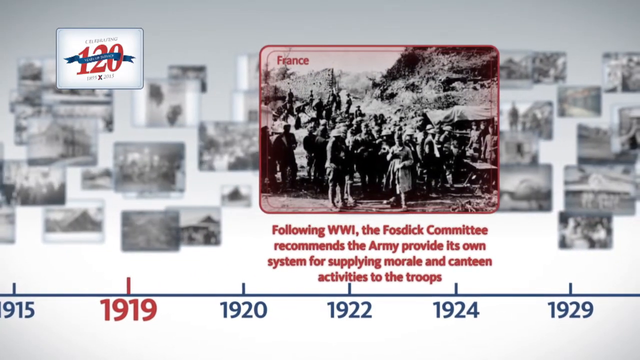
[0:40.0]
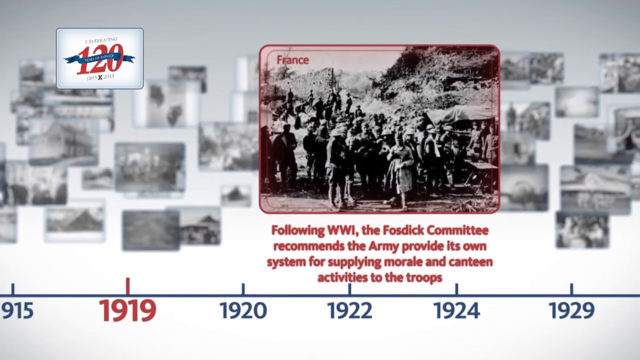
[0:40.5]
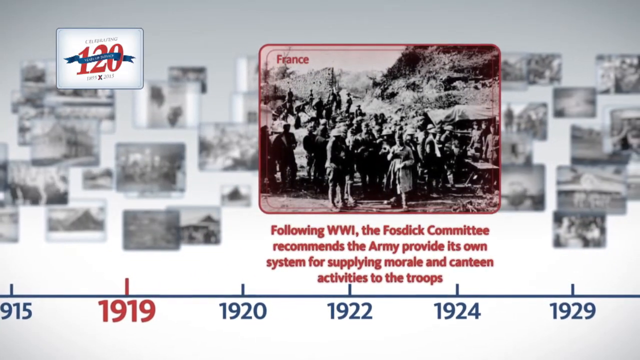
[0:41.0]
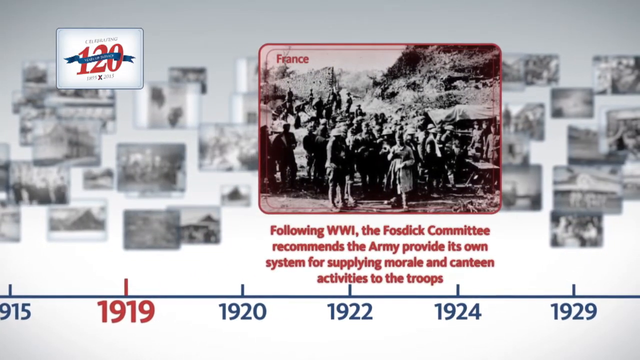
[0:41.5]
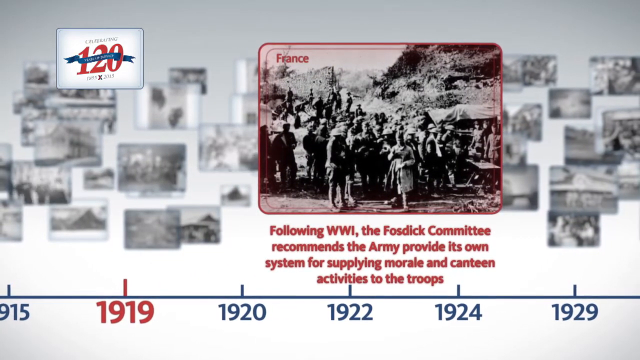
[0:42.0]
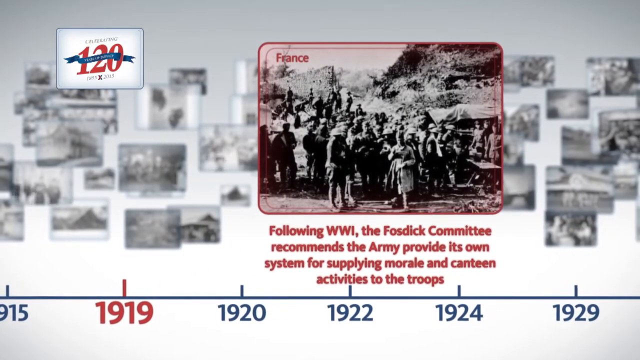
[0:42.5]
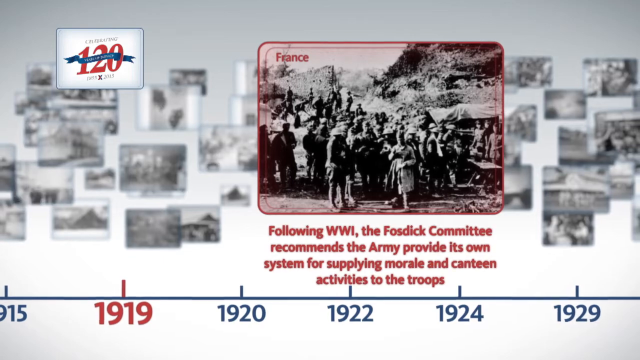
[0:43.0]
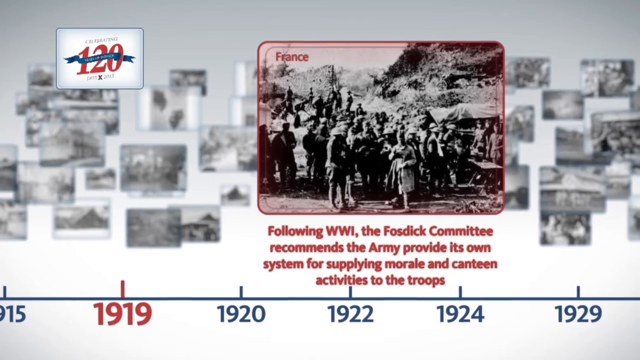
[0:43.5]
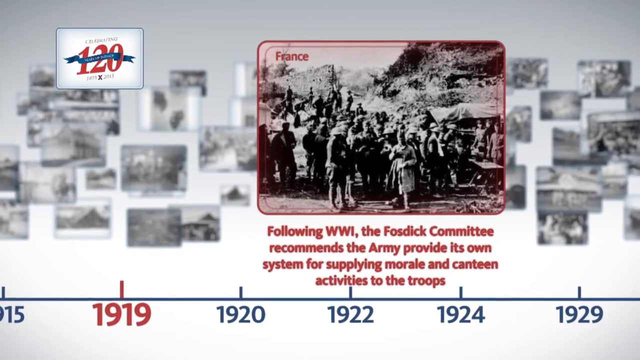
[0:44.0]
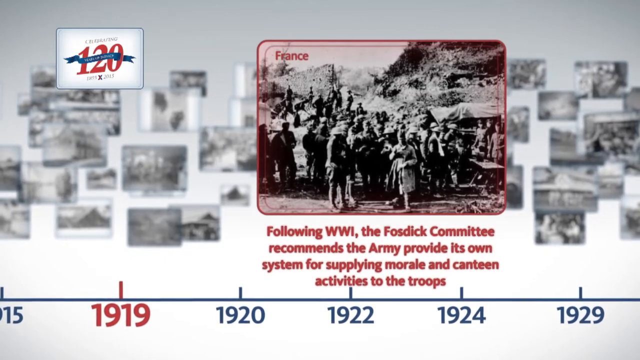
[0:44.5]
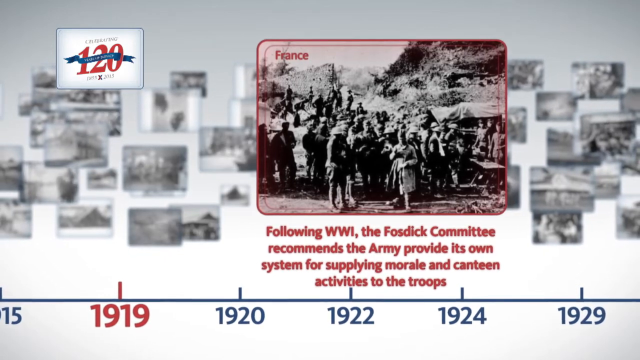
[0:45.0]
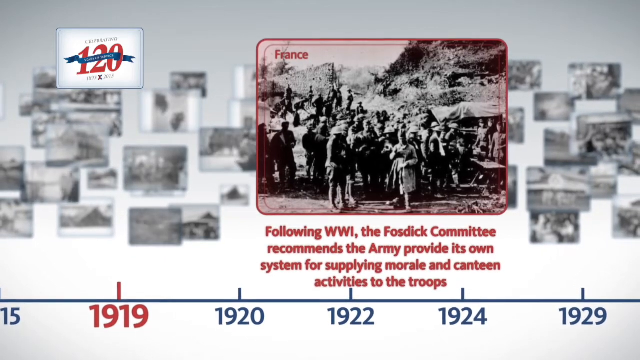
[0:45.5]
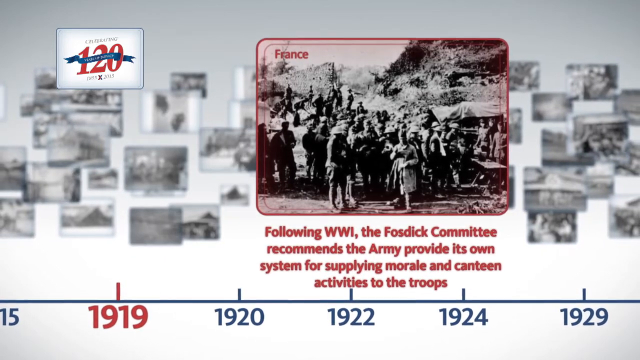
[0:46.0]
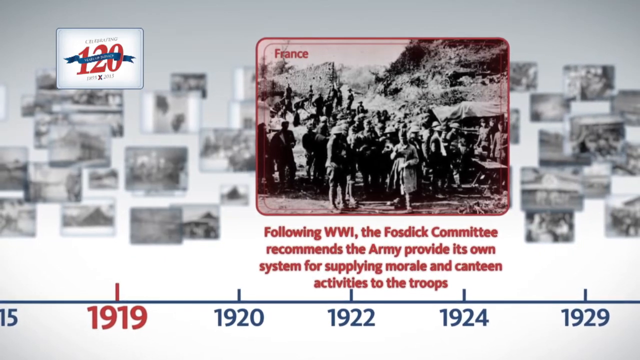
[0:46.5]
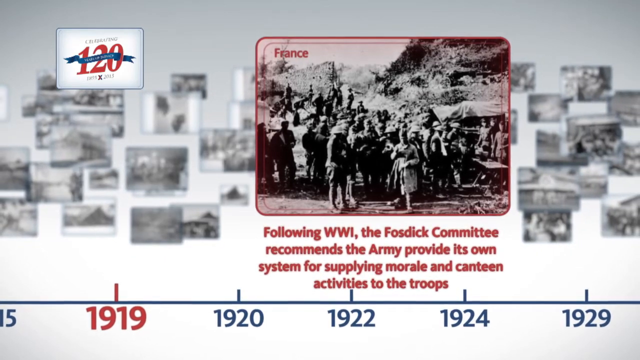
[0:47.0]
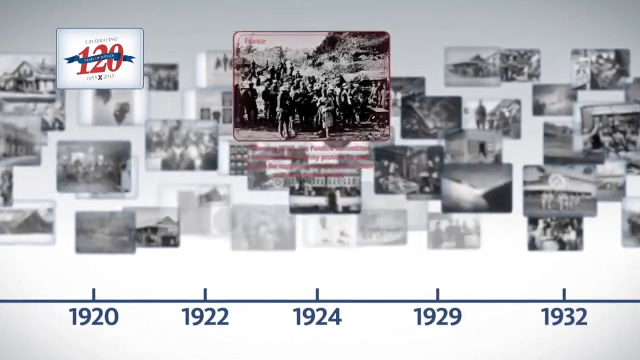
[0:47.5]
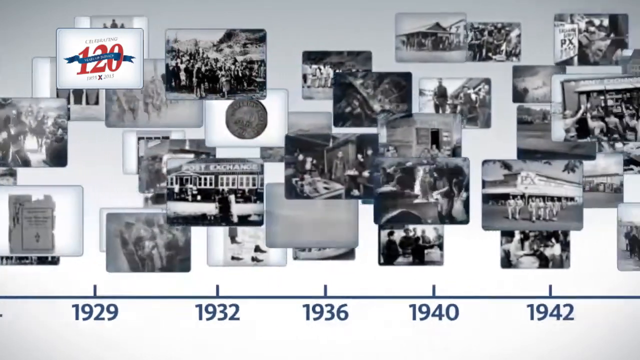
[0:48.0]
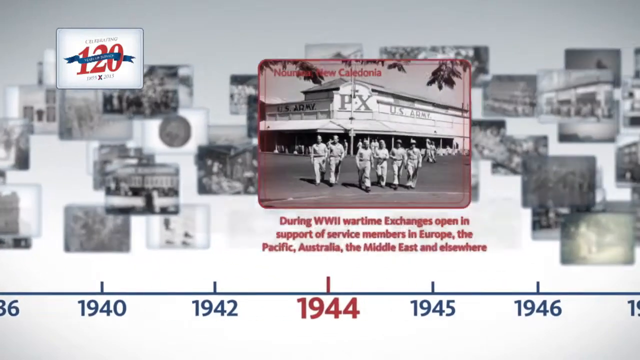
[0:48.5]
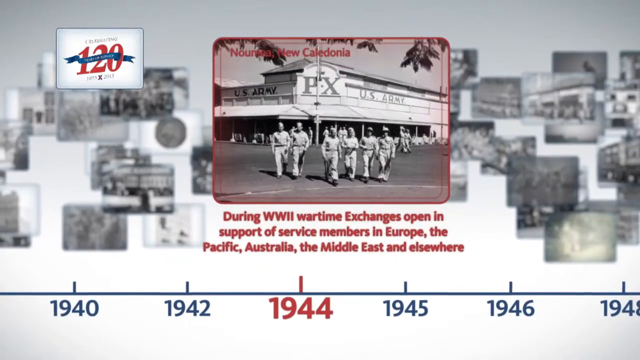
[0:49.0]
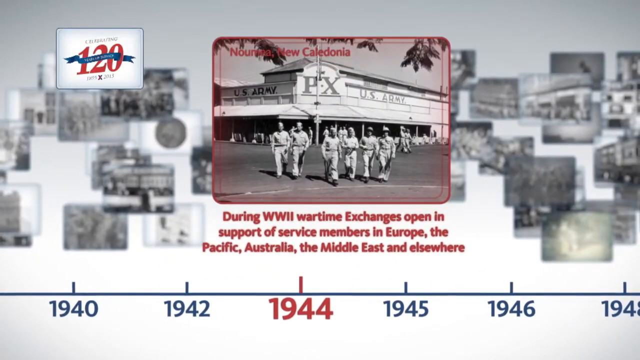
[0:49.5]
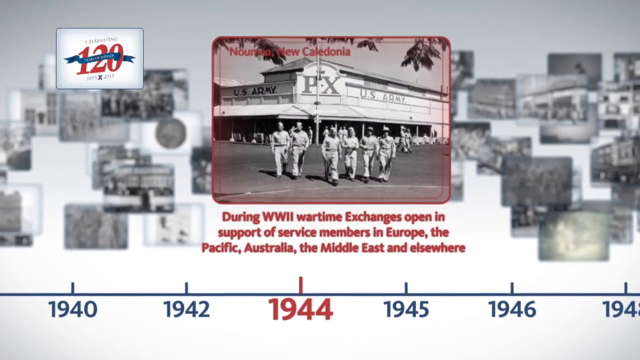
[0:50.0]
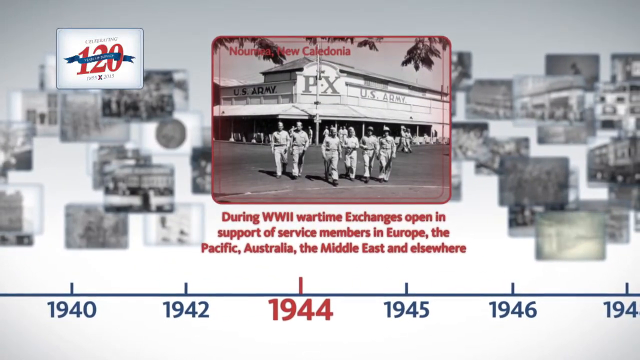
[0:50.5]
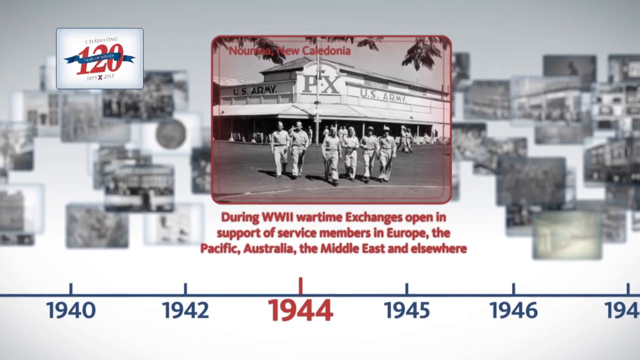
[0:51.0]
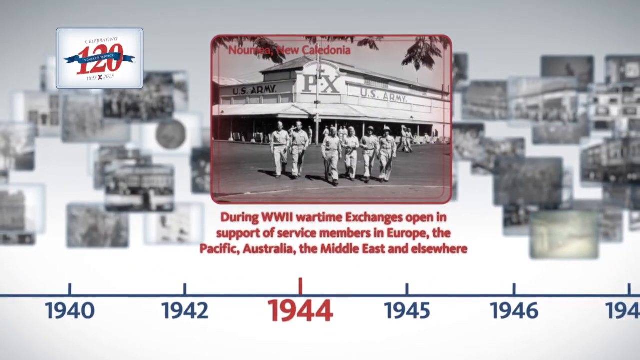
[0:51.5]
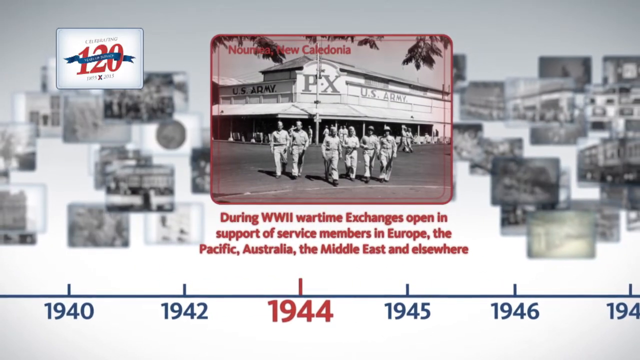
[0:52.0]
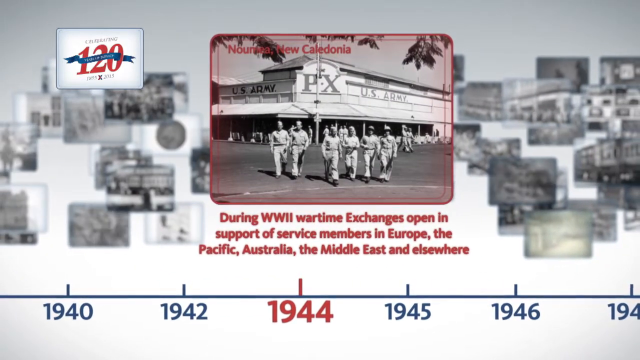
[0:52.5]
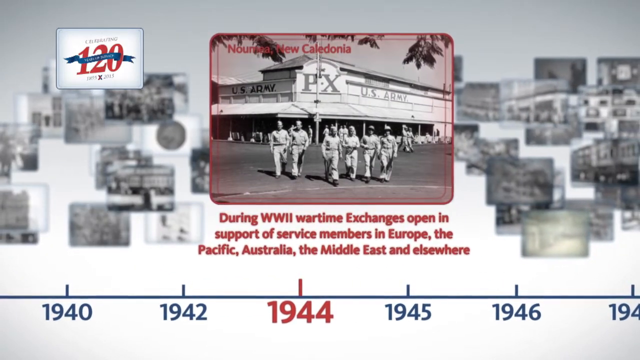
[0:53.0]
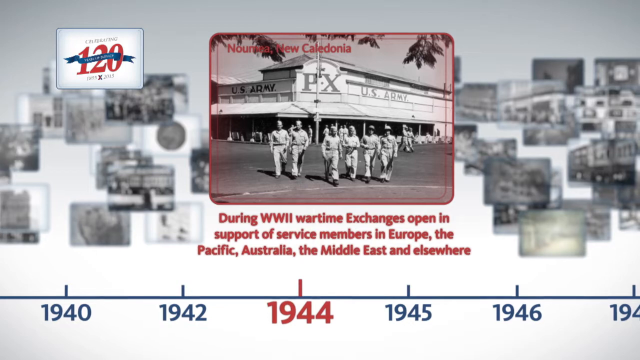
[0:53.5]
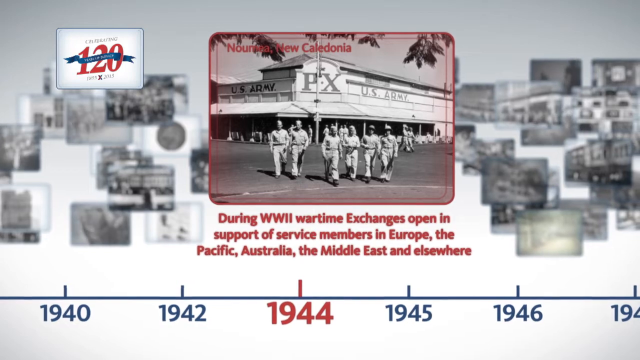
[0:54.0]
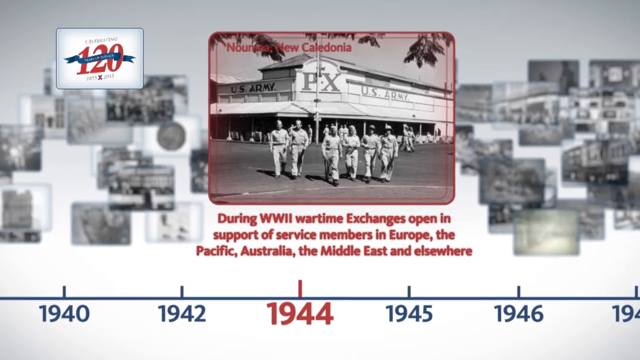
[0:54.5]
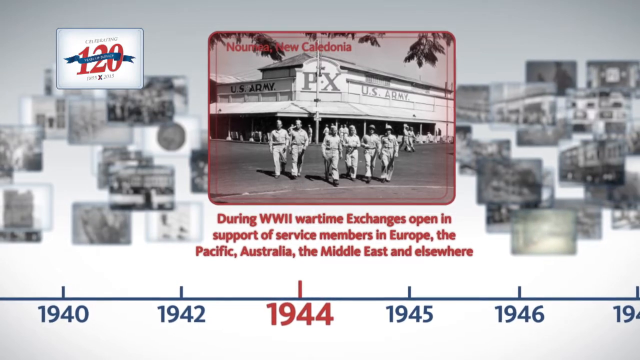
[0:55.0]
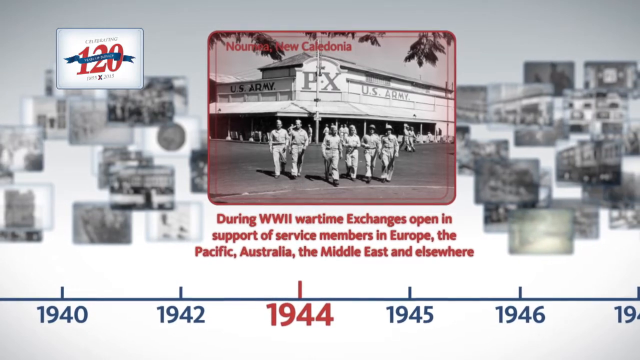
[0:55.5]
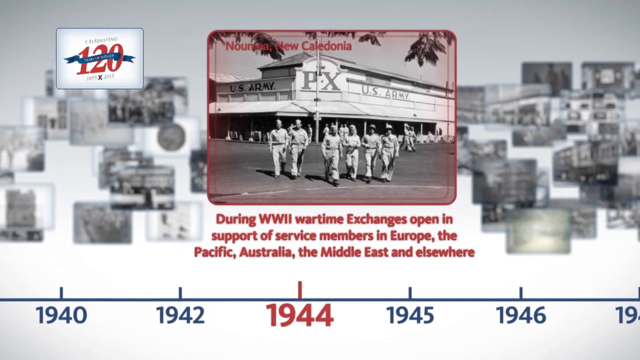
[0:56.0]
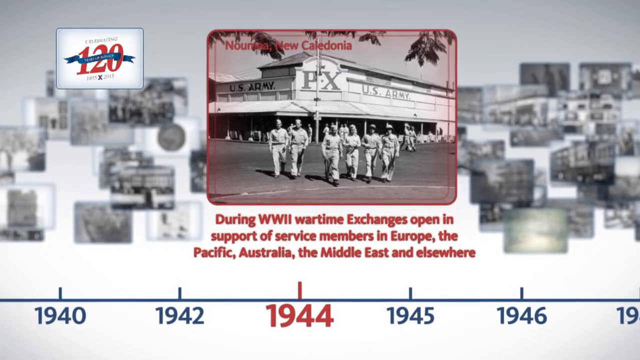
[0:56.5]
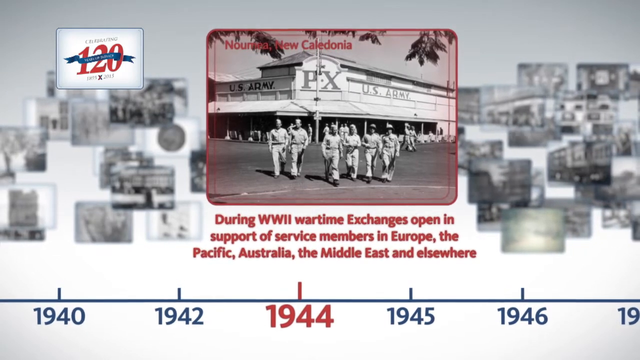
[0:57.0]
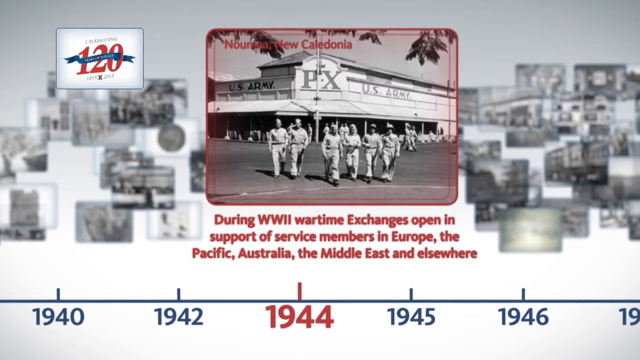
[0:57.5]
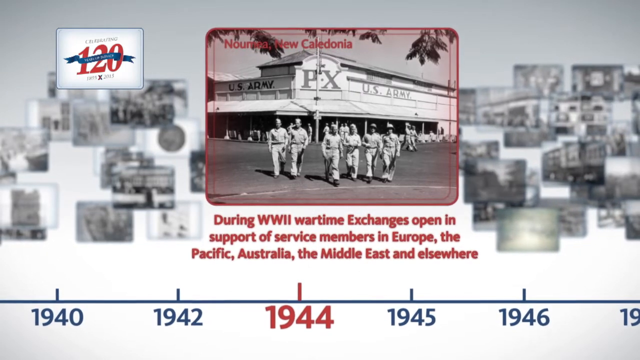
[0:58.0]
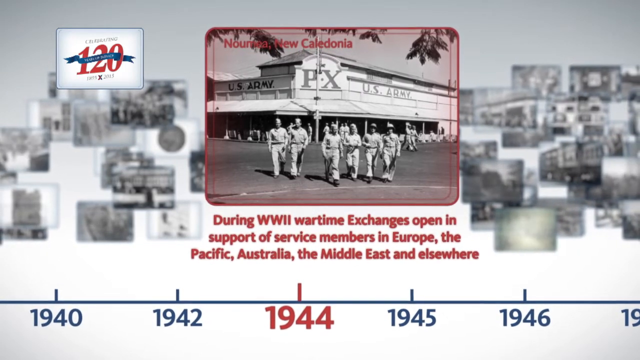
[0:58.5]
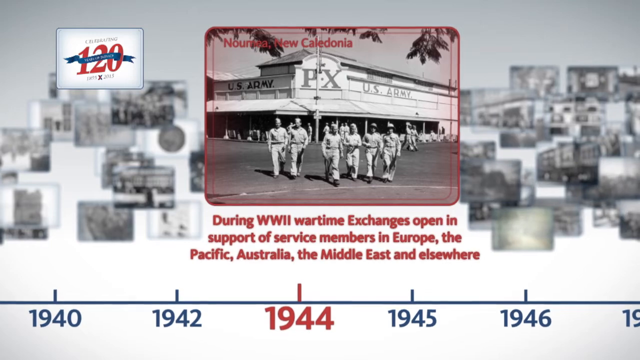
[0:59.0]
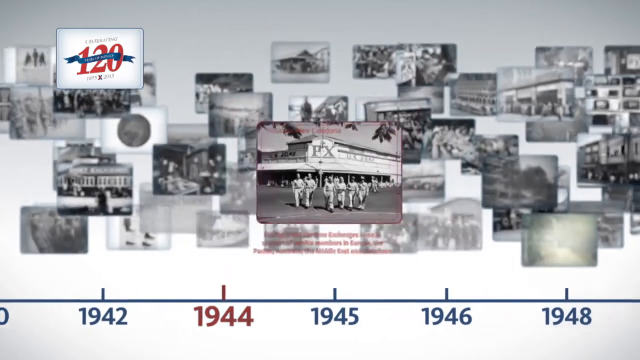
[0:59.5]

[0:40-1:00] The timeline reaches 1919 in France. A black and white photograph of a group of men is highlighted from the other photographs, bordered in red with lighter red bleeding into it, and text in its upper left corner reads "France." The event it marks follows World War I: the Boston Committee recommends the army provide its own system for supplying morale and canteen activities to troops. A second photograph is then highlighted for 1944, during World War II, when wartime exchanges opened in support of service members in Europe, the Pacific, Australia, the Middle East and elsewhere; text in its upper left corner names New Caledonia.